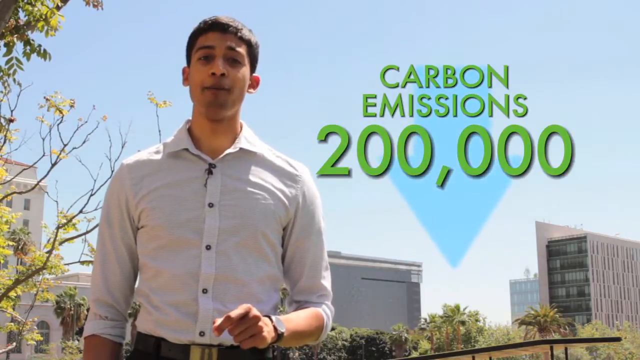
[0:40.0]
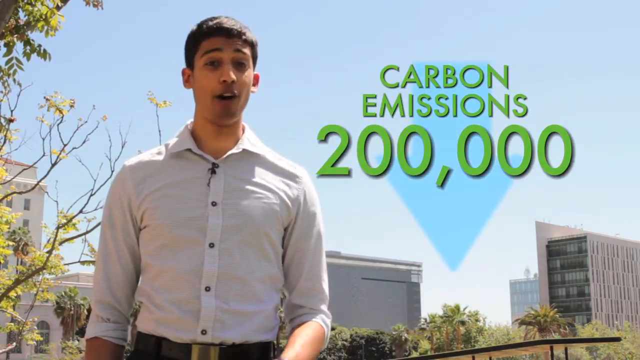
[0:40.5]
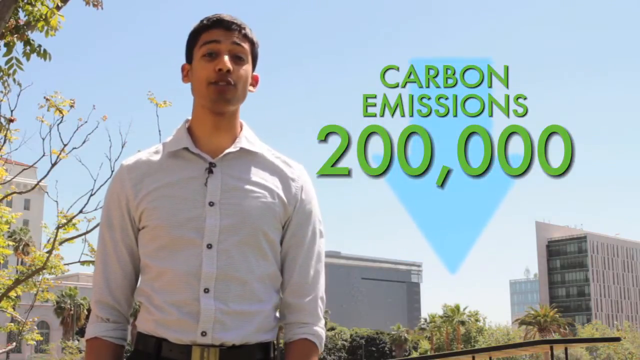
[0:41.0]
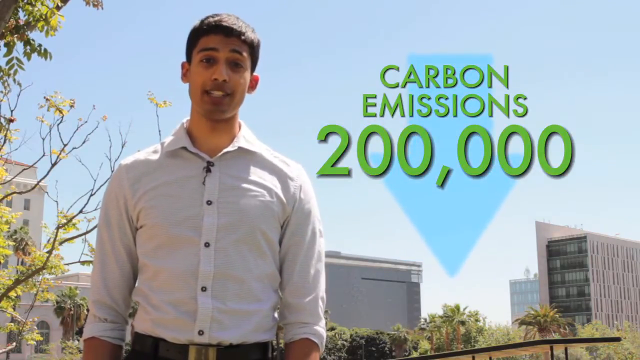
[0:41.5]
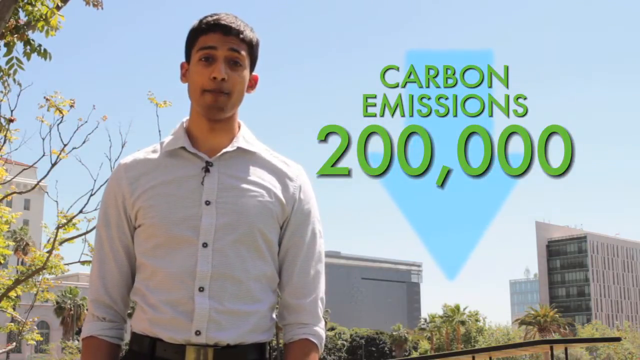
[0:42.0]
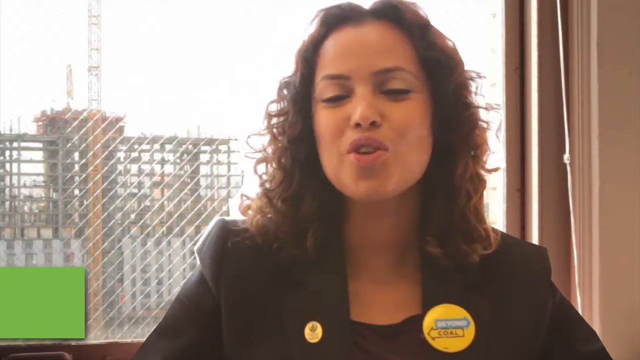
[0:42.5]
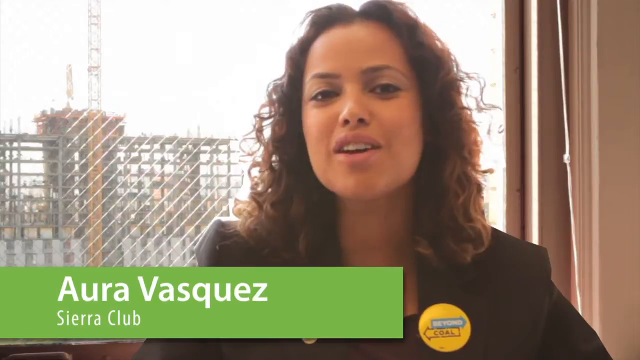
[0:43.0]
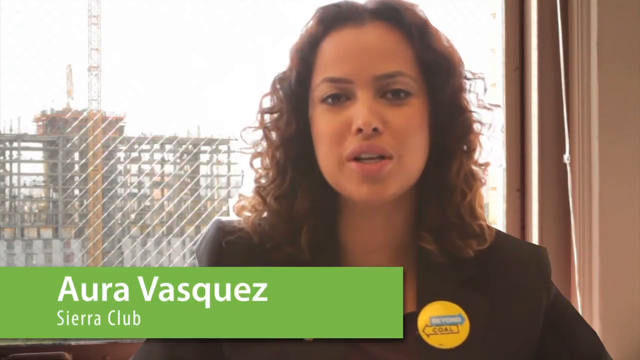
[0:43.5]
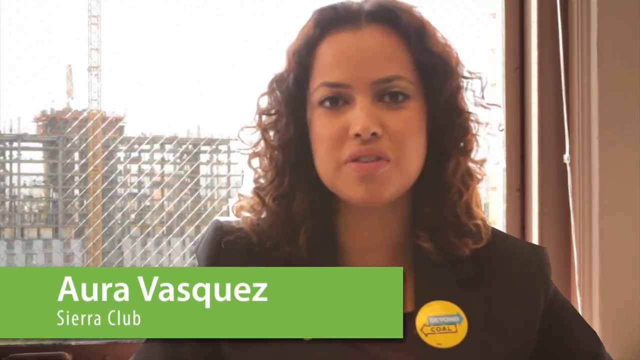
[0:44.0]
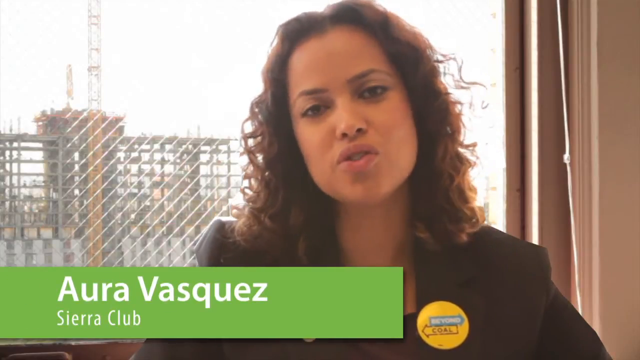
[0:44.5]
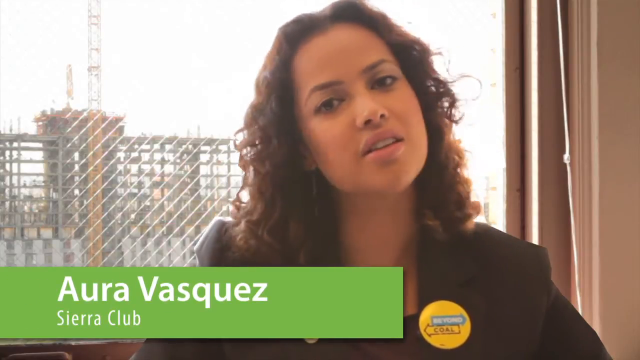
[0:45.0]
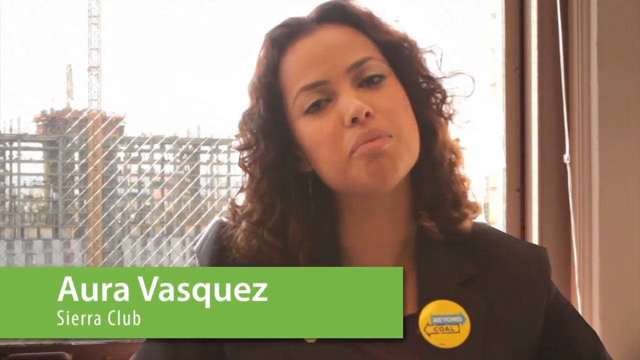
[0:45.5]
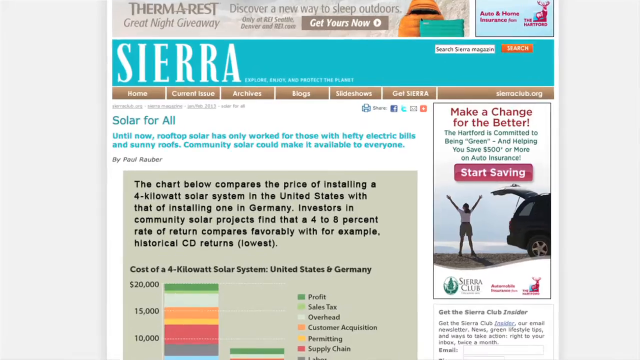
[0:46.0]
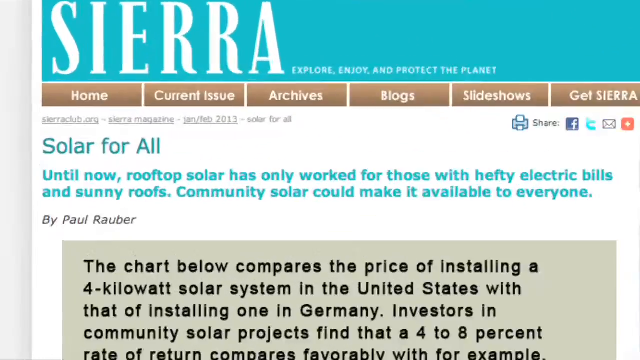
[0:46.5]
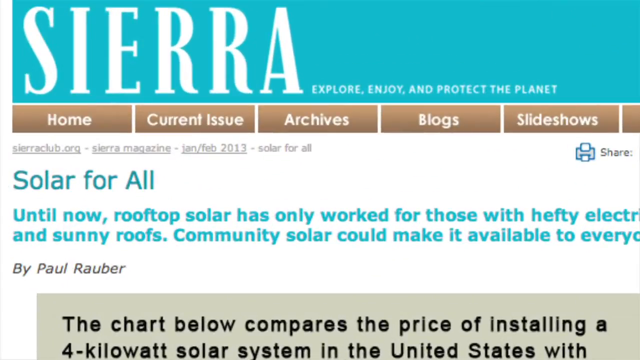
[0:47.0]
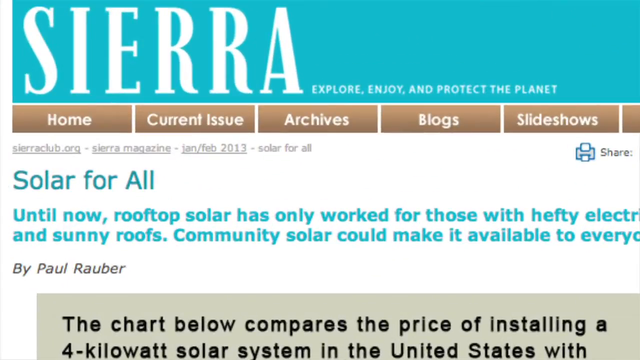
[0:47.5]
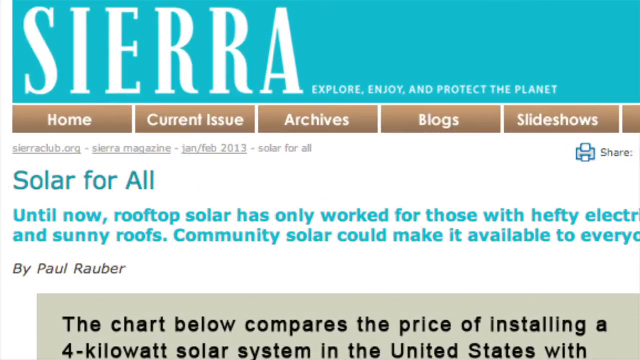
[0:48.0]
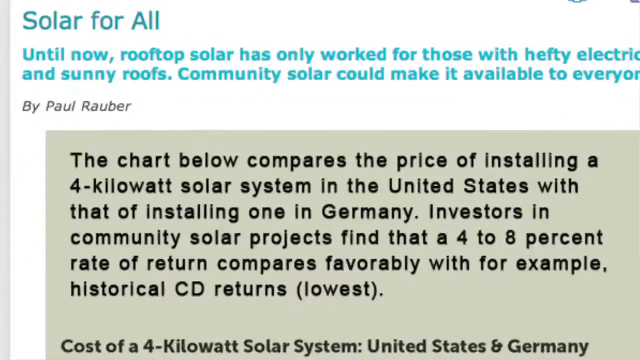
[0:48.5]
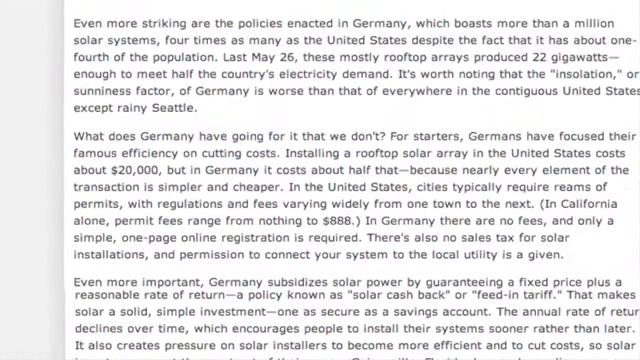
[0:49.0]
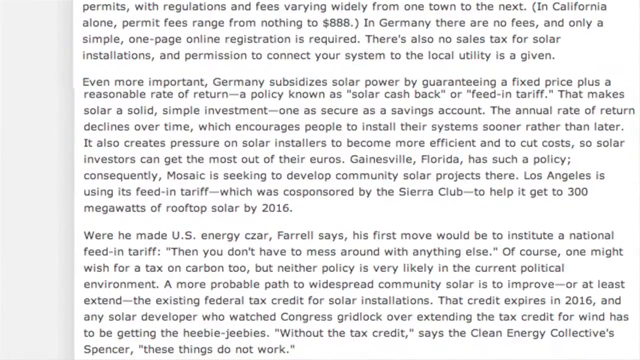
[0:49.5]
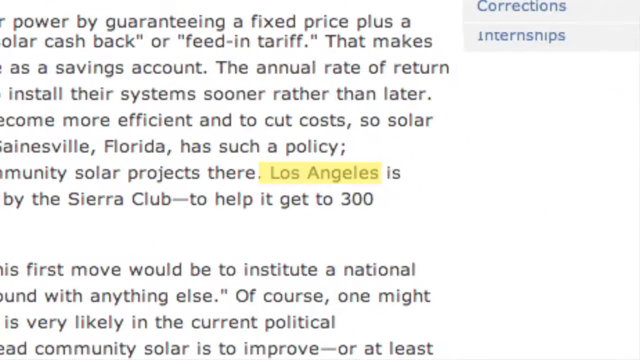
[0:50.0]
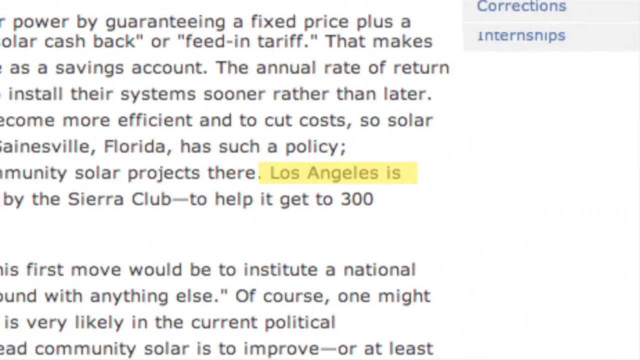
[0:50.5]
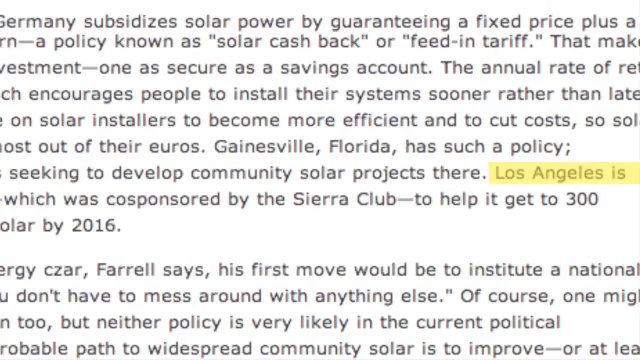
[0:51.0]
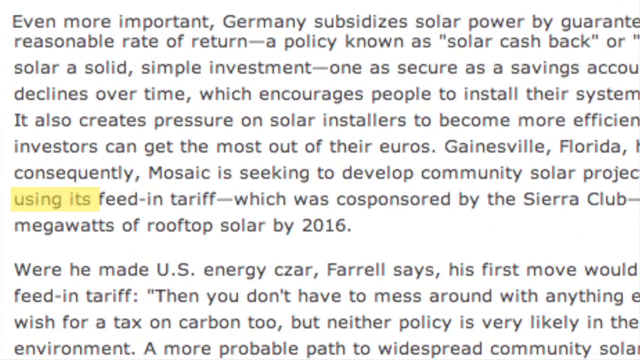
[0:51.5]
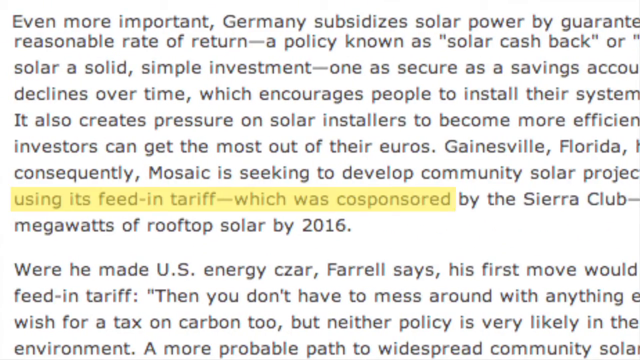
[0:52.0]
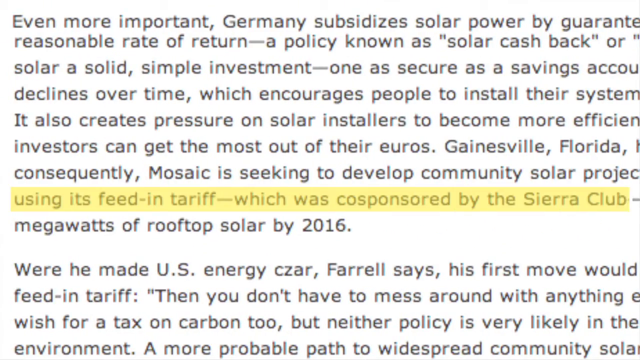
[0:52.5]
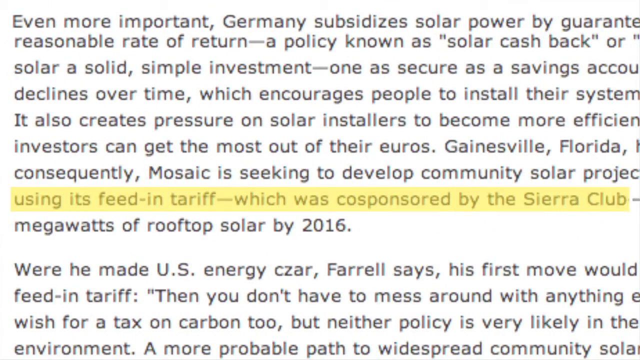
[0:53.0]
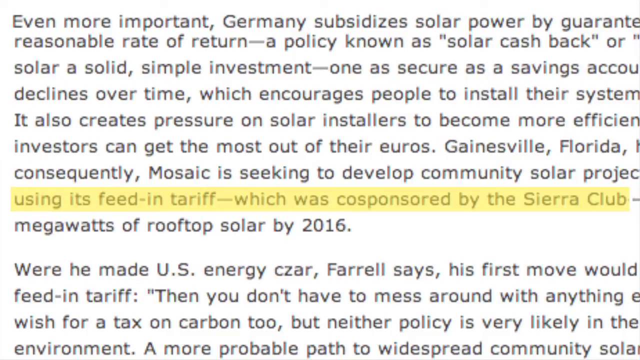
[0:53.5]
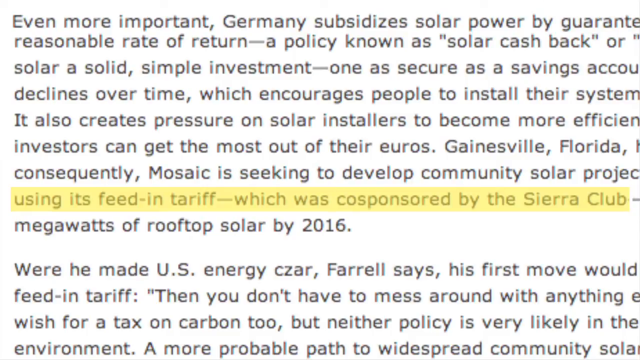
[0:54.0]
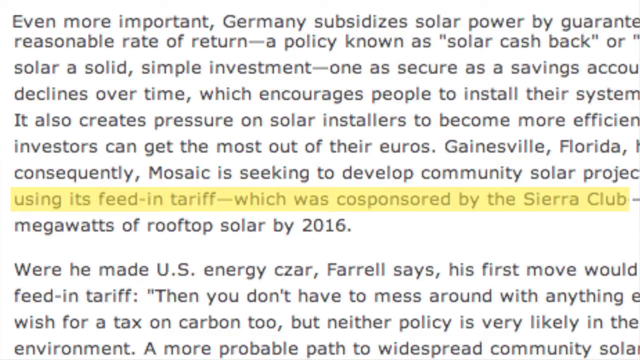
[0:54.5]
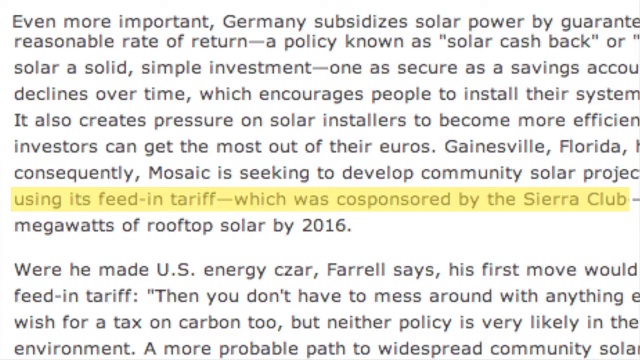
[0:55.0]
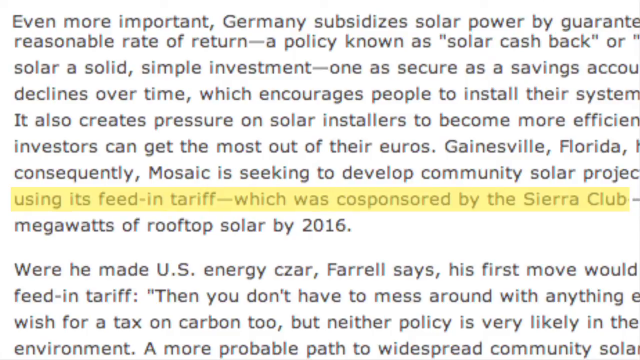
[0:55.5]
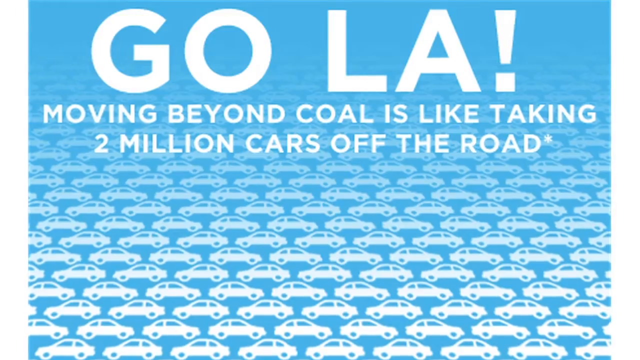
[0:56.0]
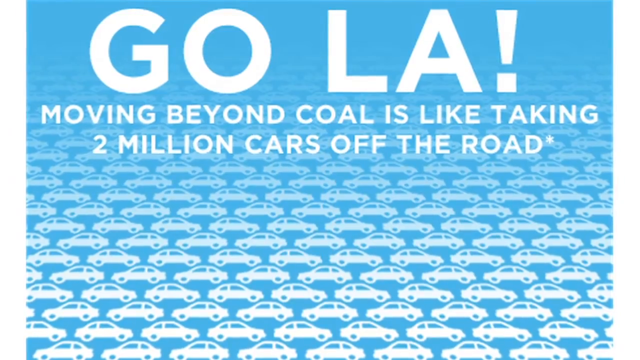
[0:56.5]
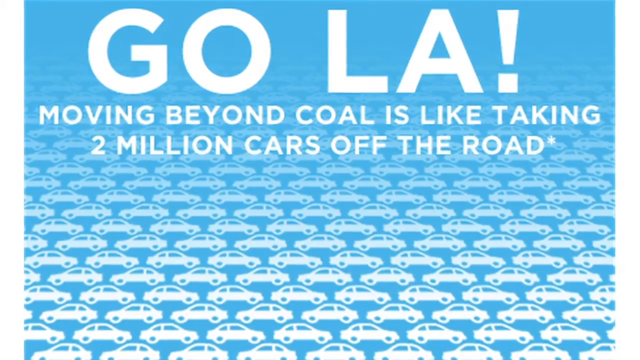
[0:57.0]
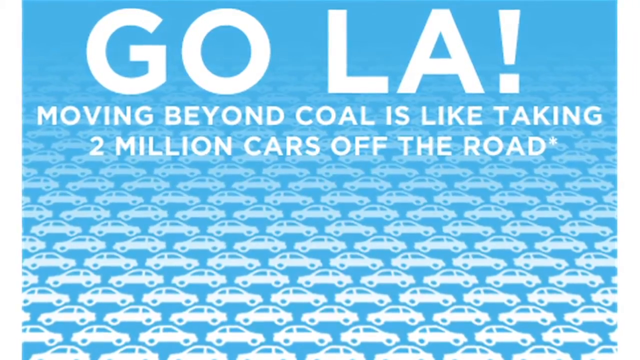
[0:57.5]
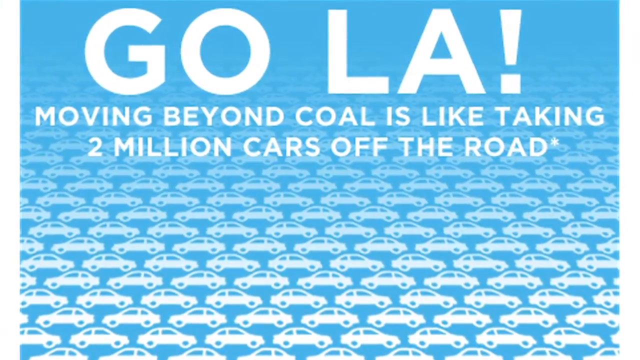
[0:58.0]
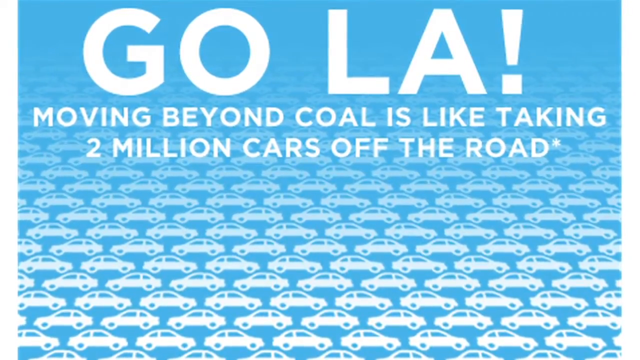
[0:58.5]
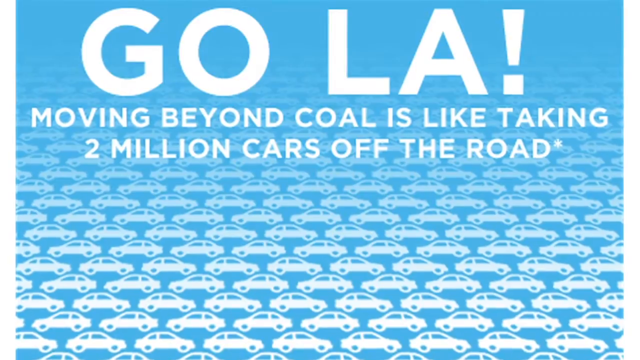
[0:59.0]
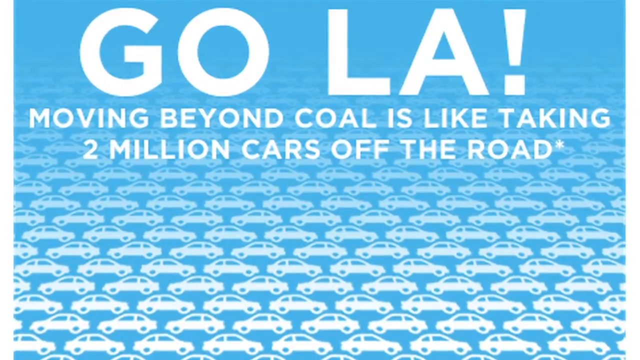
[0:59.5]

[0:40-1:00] As the man speaks, text on the screen reads "carbon emission 200,000" with a blue arrow pointing downward. He stands in the same setting, with a city skyline behind him, sunny weather and an open, light blue sky; a couple of branches and some leaves of a tree are on the left side of the screen. The video then transitions to a close-up view of a woman named Aurora Vazquez, who seems to be from Sierra Club. She seems to be sitting in front of a window, and outside it on the left there is construction and a crane. She speaks briefly. The video then suddenly switches to a website named Sierra, where text in turquoise reads "solar for all". Text in the article about Los Angeles using its tariff, co-sponsored by Sierra Club, is highlighted in yellow.